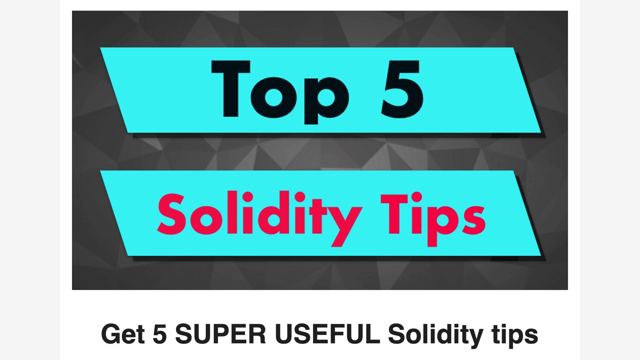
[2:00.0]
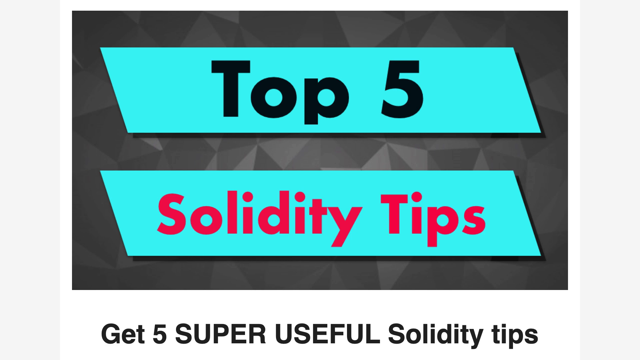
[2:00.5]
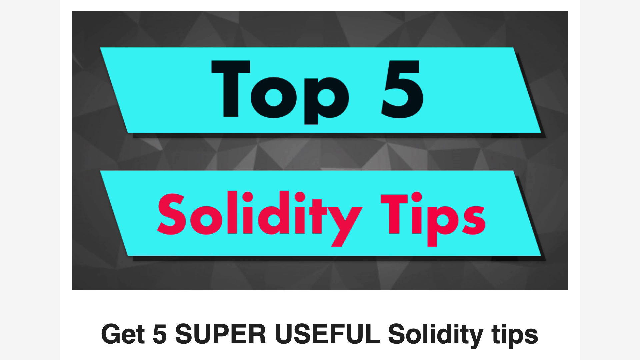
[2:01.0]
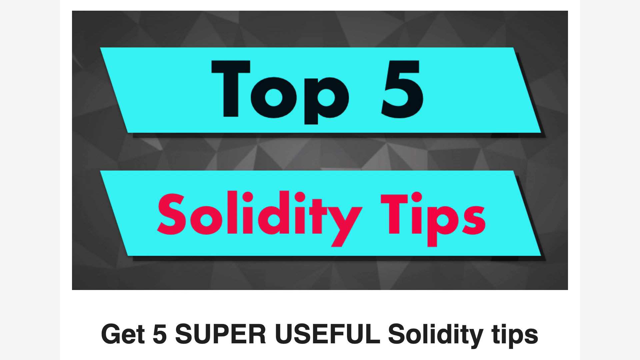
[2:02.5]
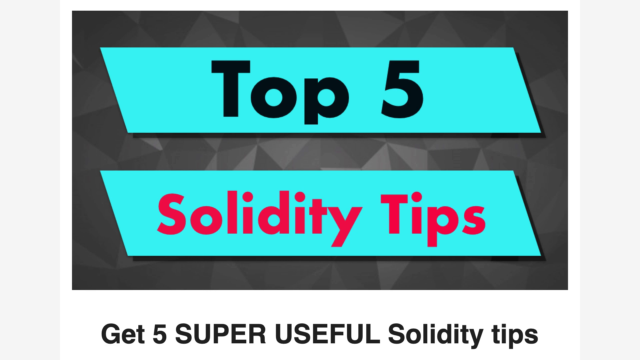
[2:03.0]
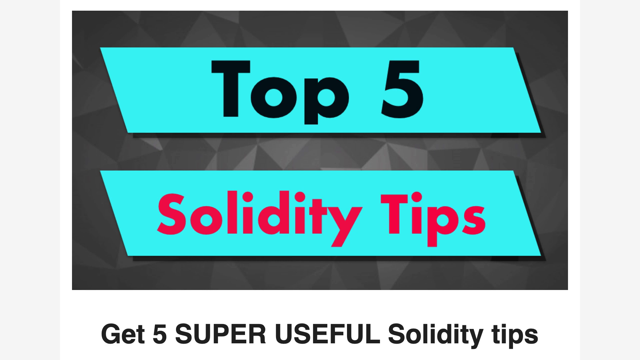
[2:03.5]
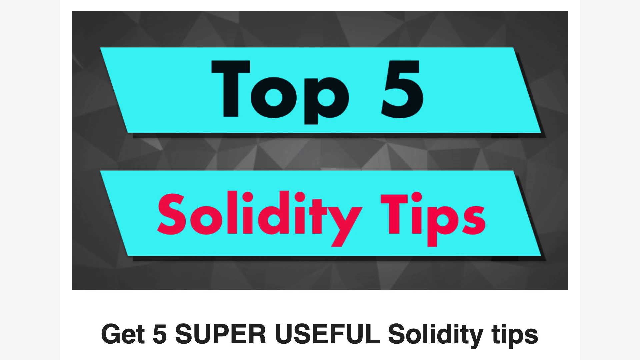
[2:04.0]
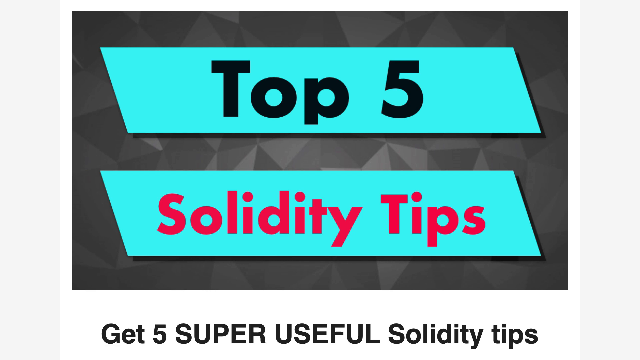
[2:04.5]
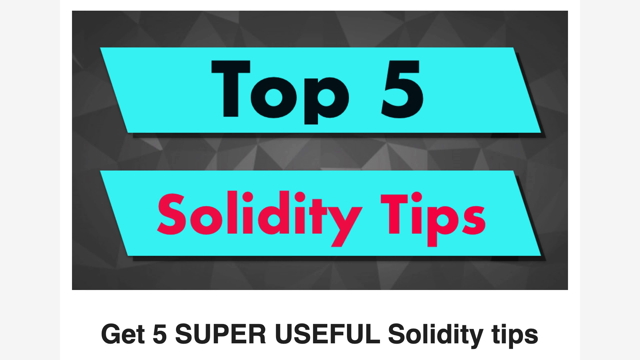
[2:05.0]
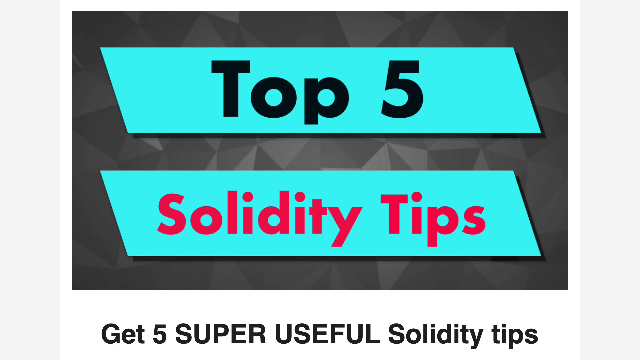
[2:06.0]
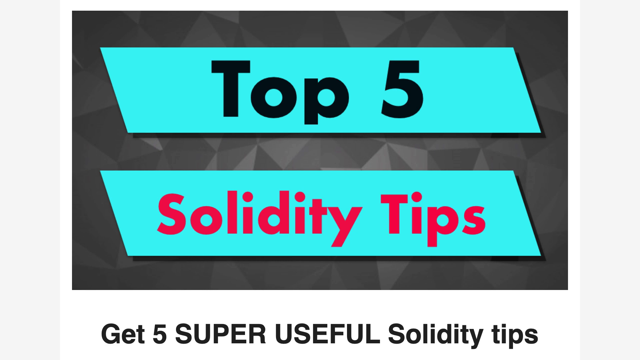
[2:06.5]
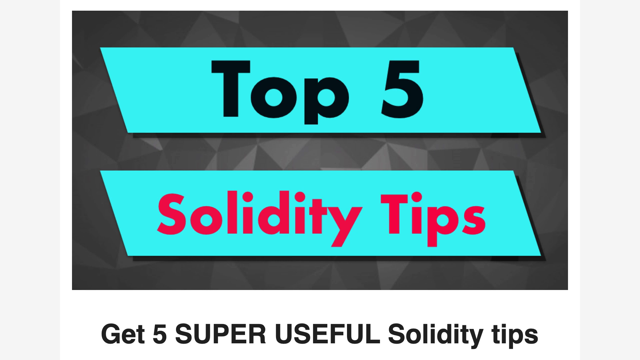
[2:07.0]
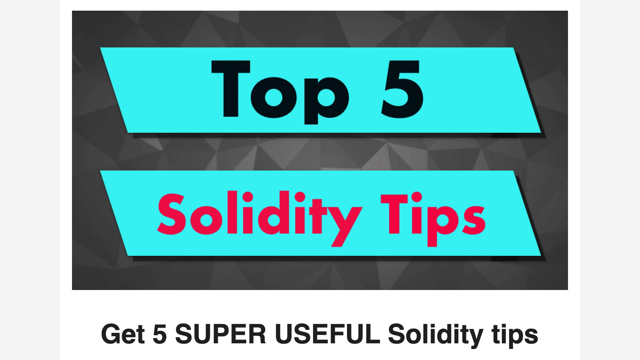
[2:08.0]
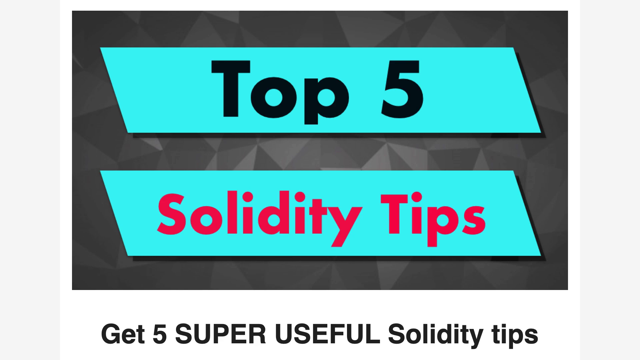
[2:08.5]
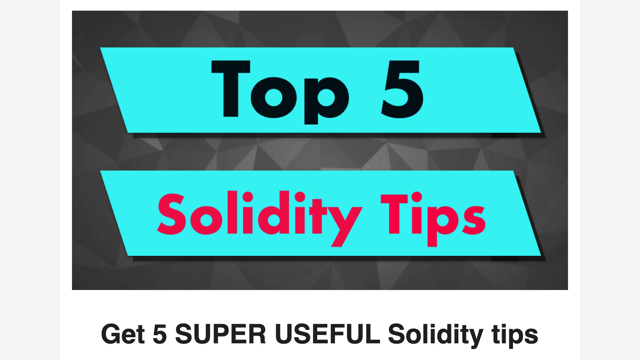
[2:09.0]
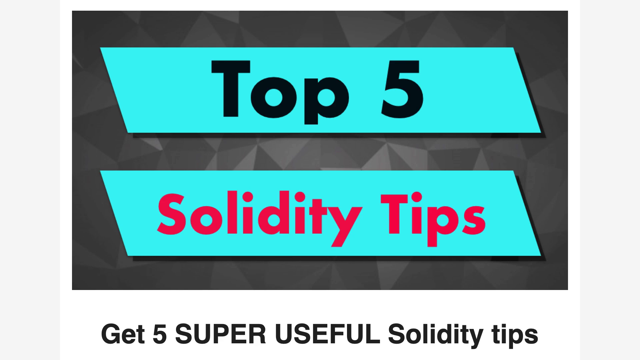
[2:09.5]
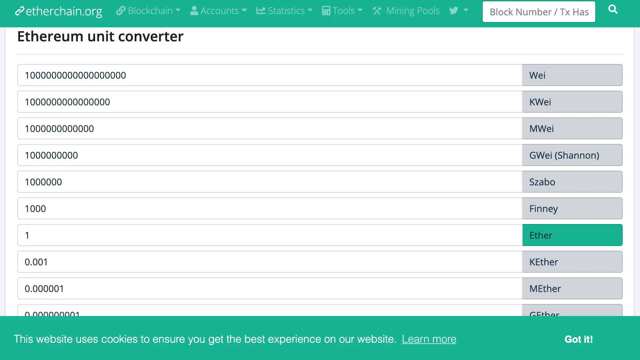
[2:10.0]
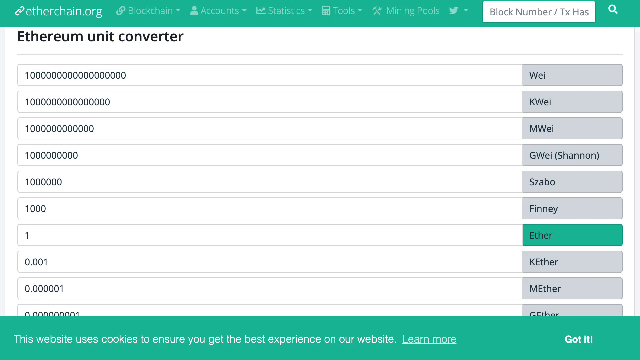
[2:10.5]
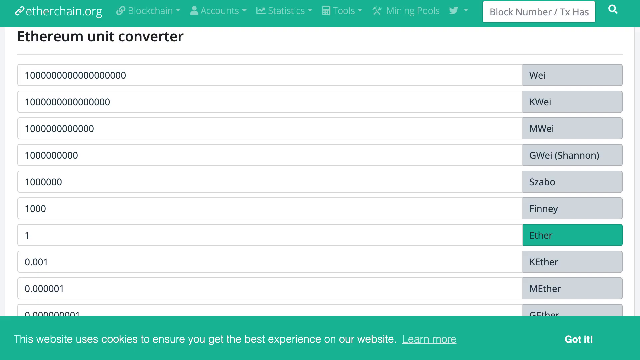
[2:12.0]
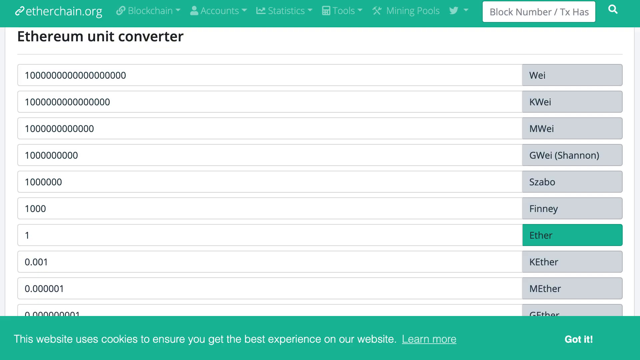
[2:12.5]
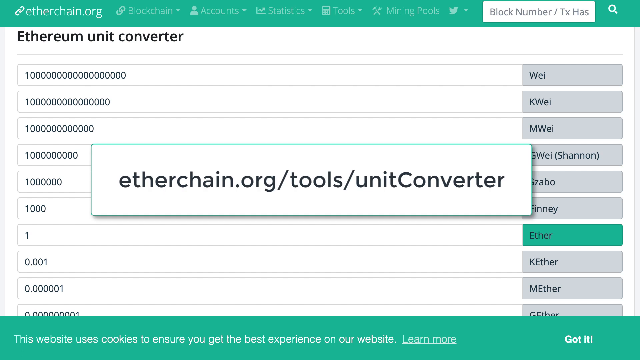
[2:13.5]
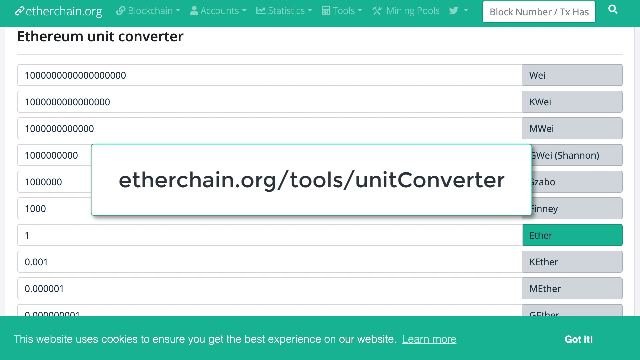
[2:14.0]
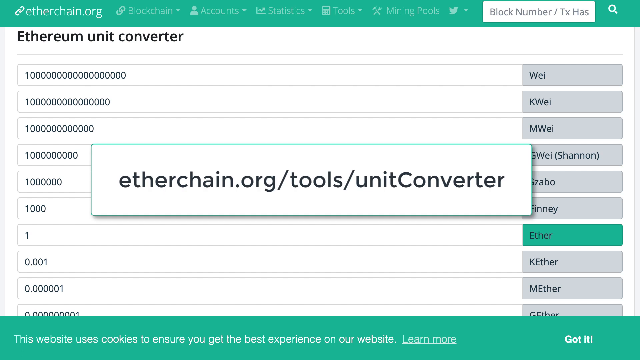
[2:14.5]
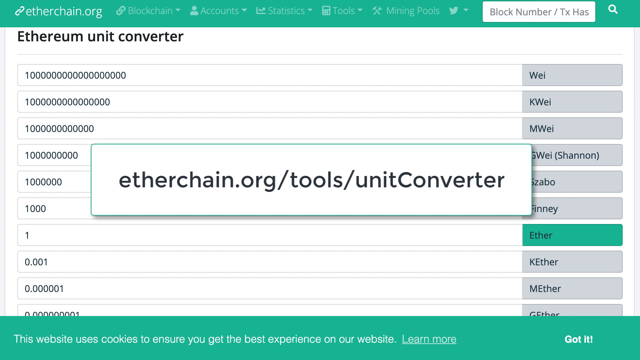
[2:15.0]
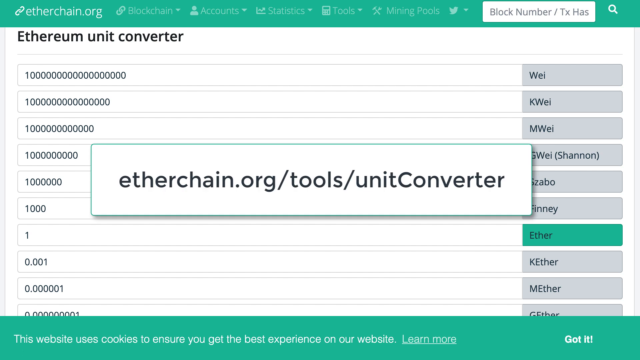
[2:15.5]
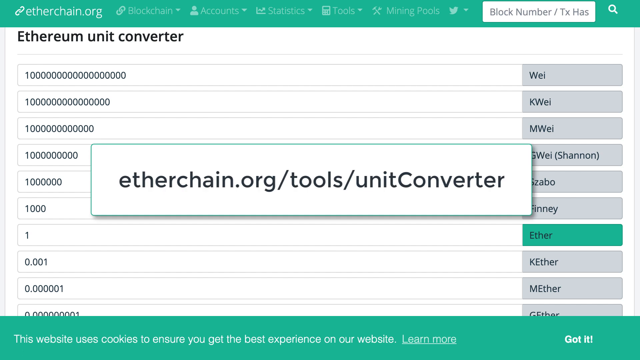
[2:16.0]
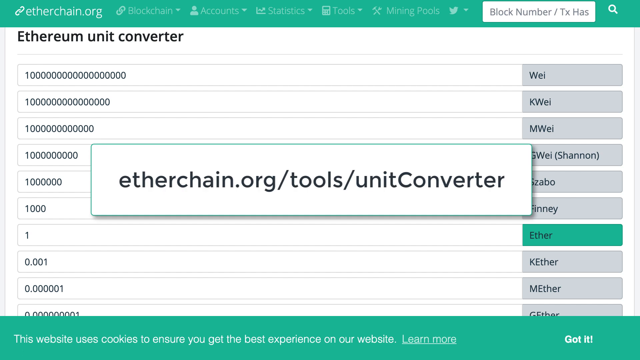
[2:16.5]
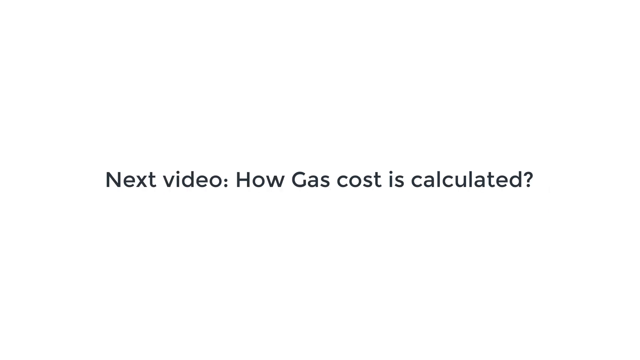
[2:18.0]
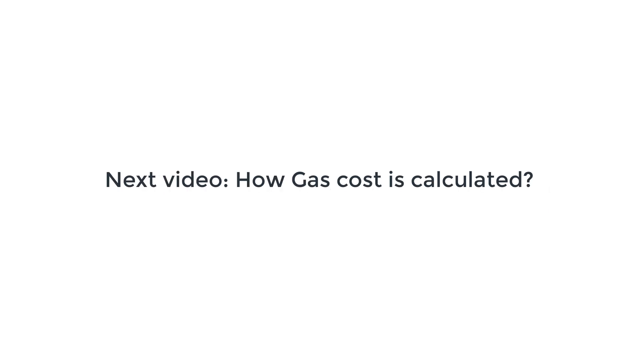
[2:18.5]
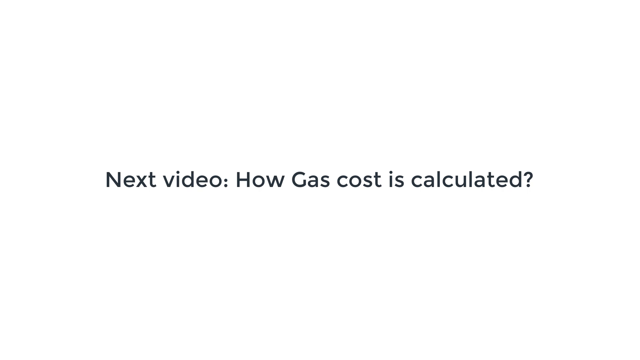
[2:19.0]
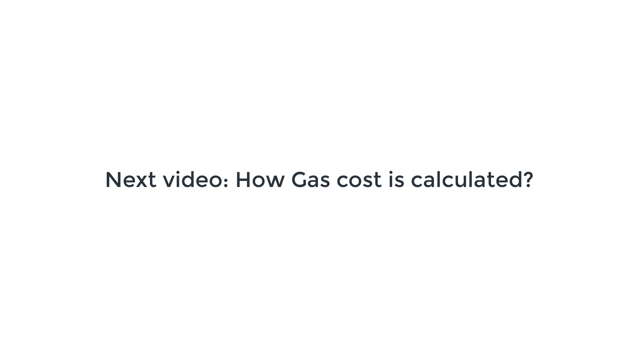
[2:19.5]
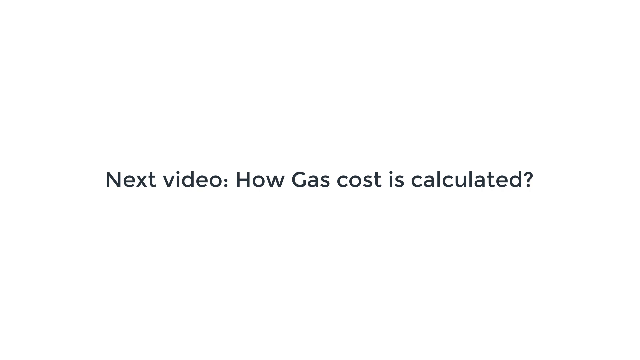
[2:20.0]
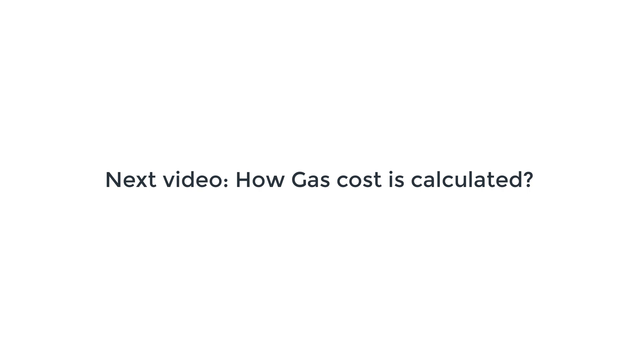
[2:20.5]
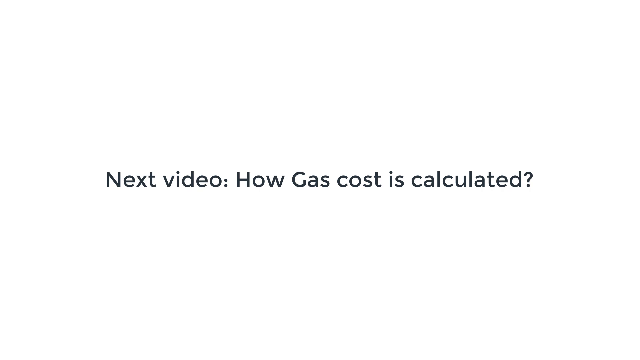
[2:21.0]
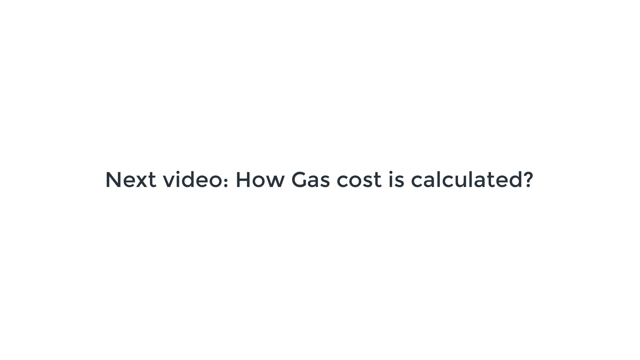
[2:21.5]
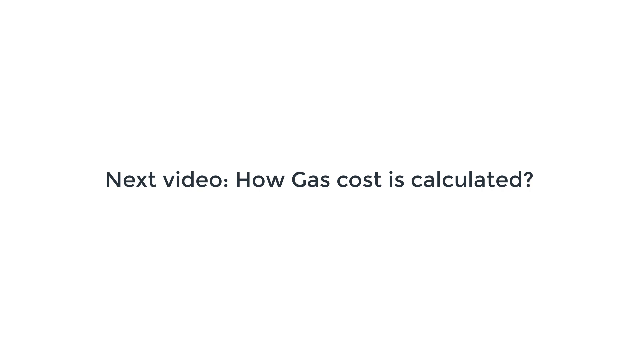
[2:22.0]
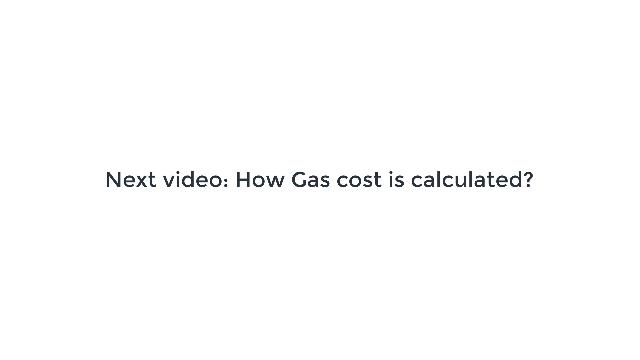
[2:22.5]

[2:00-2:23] Two teal parallelograms have words on them: the top one says "top five" and the bottom one says "solidity tips". "Solidity tips" is in red and "top five" is in blue, in a bigger font than "solidity tips". The video moves to a page with numbers in the background and a long, skinny green rectangle at the top. Gray rectangles run down the right side, except for one that says "ether", which is green. A white box pops up in the middle saying "etherchain.org/tools/unit converter". Then words appear on a blank white screen: "next video: how gas cost is calculated".